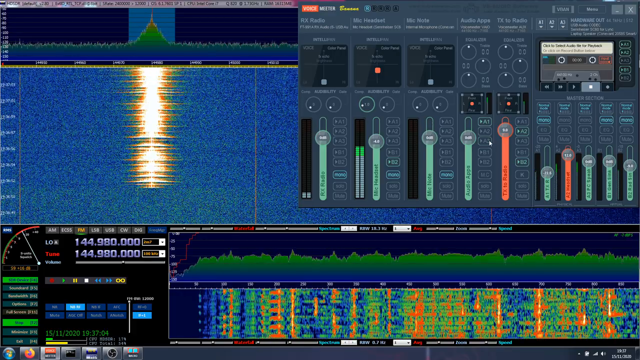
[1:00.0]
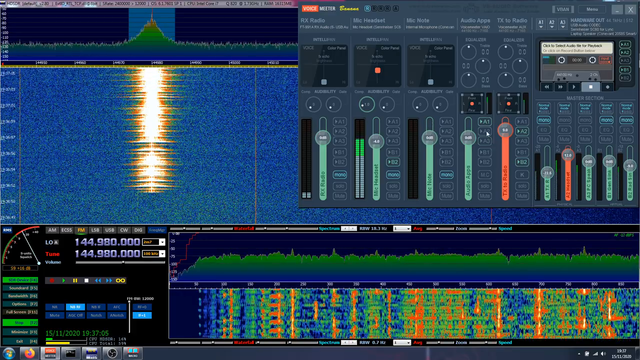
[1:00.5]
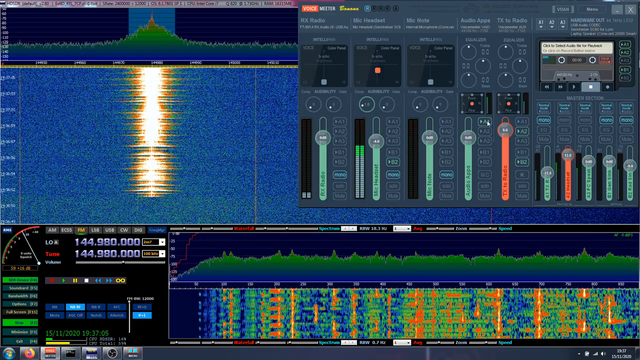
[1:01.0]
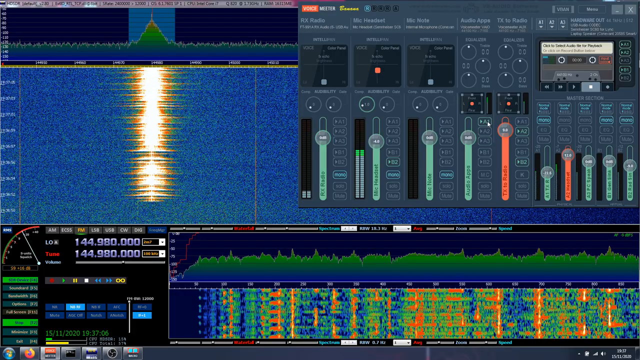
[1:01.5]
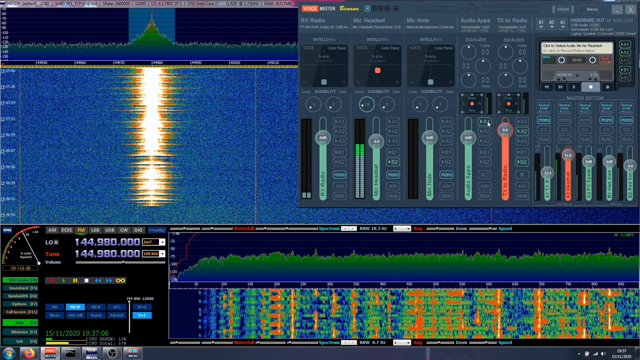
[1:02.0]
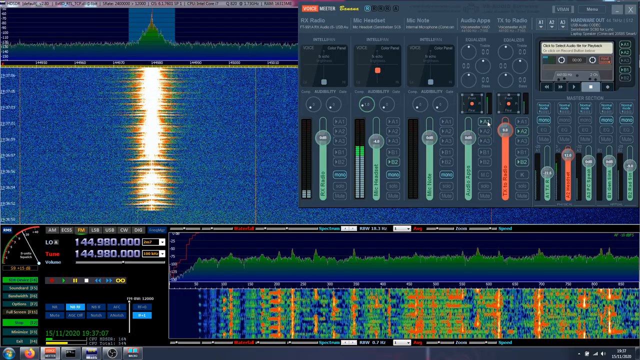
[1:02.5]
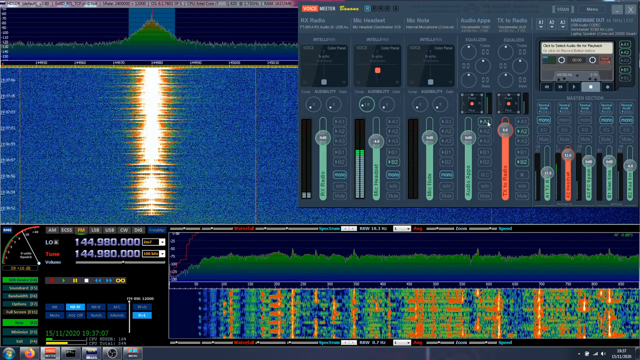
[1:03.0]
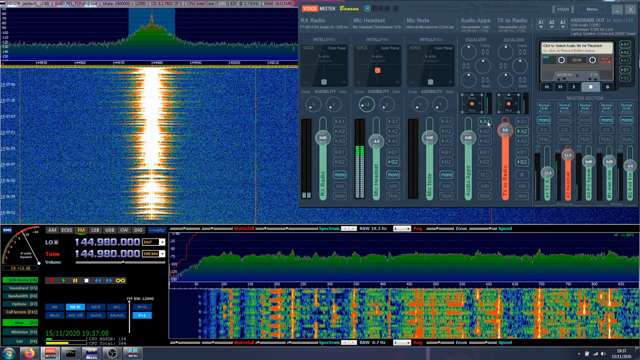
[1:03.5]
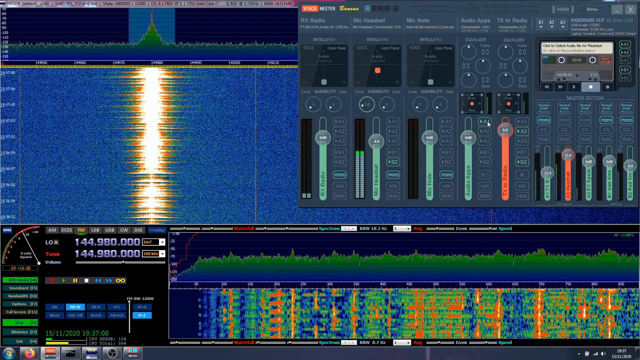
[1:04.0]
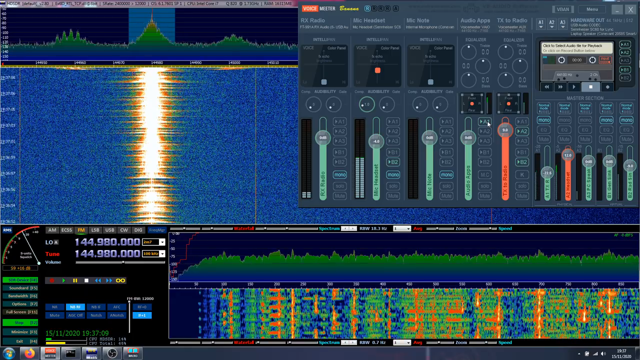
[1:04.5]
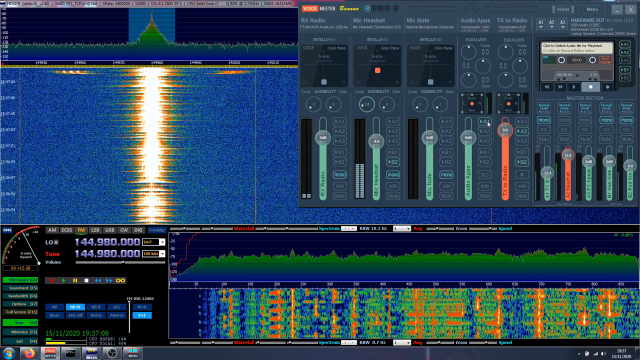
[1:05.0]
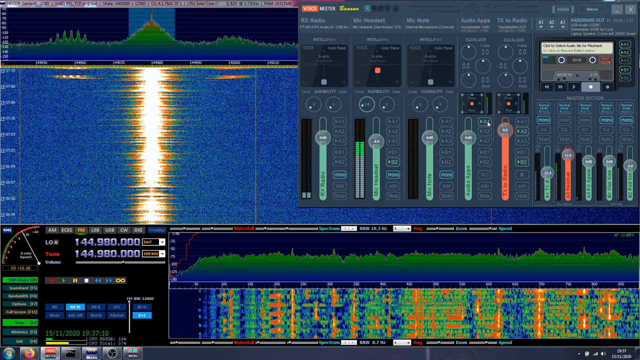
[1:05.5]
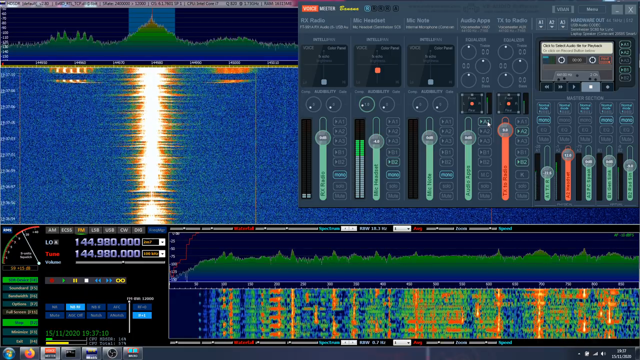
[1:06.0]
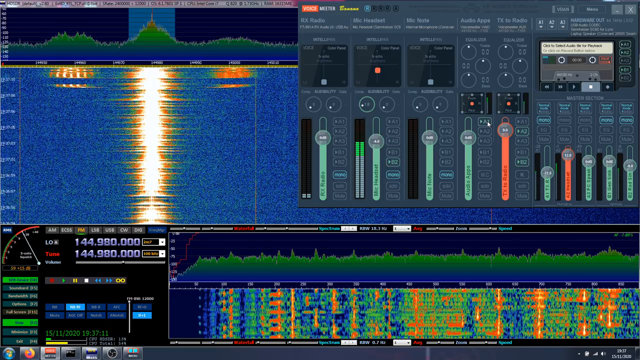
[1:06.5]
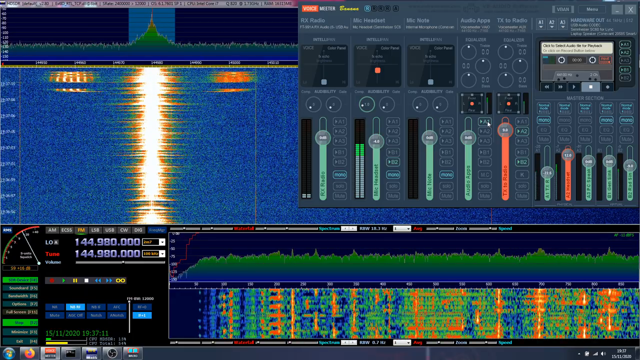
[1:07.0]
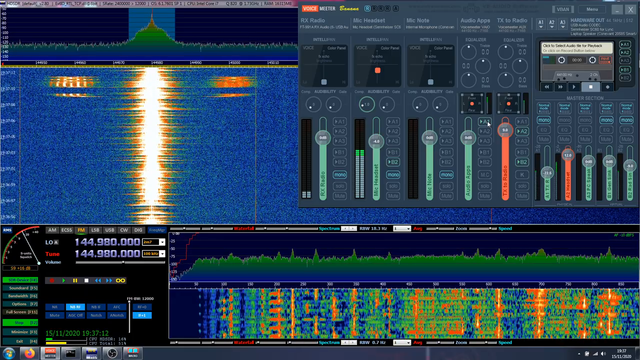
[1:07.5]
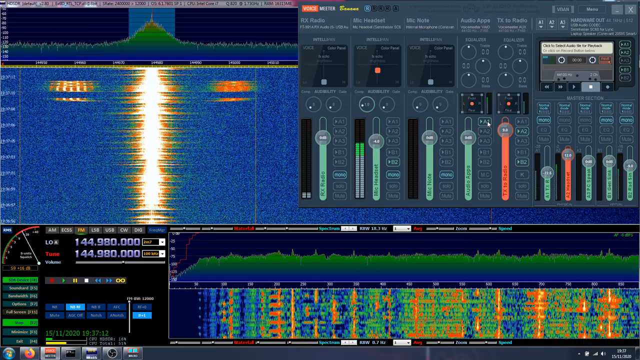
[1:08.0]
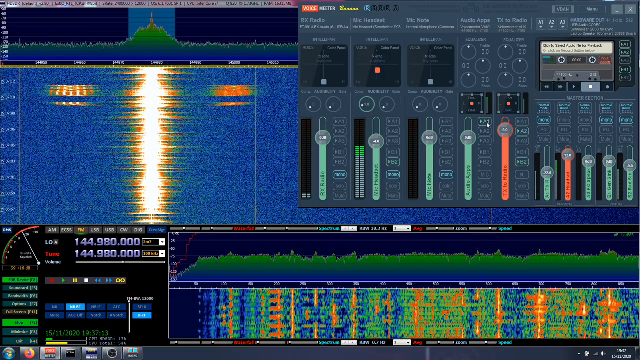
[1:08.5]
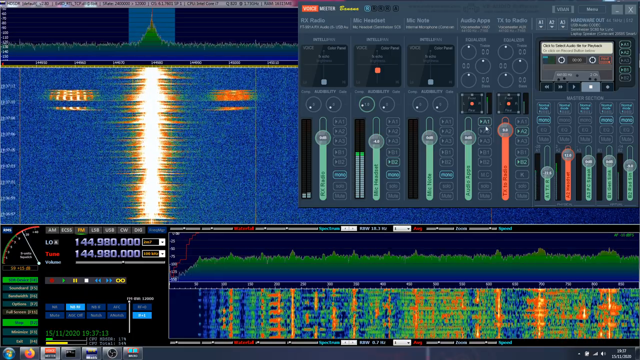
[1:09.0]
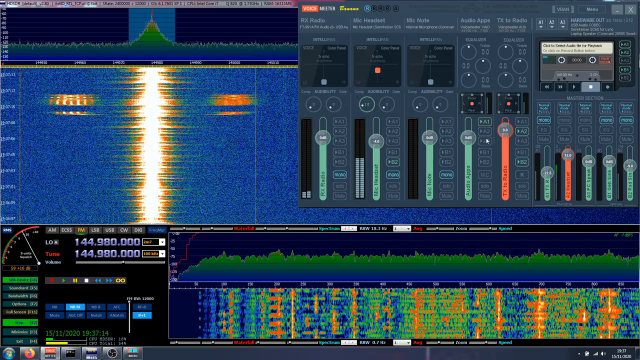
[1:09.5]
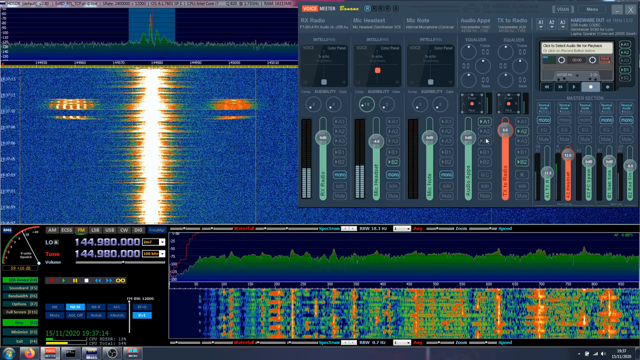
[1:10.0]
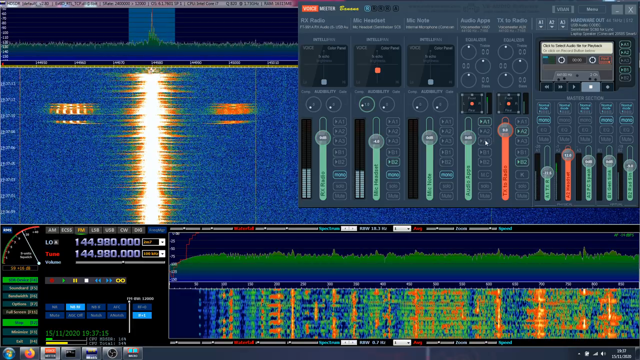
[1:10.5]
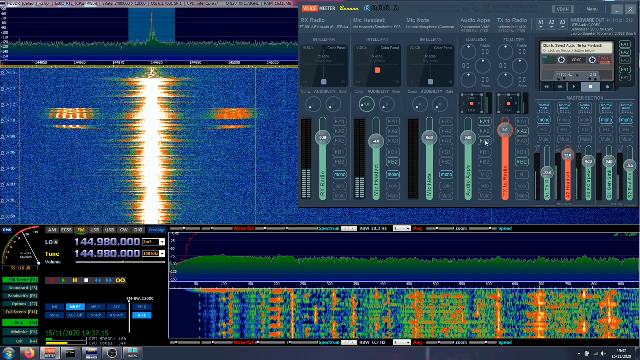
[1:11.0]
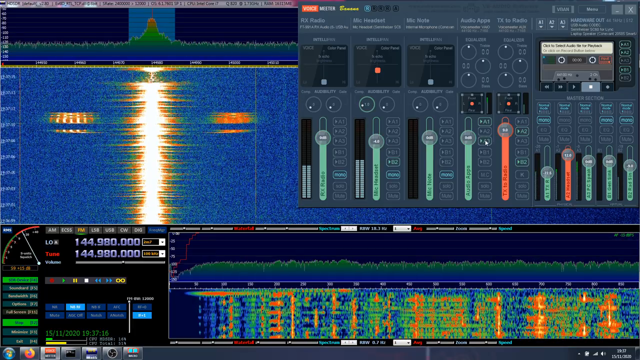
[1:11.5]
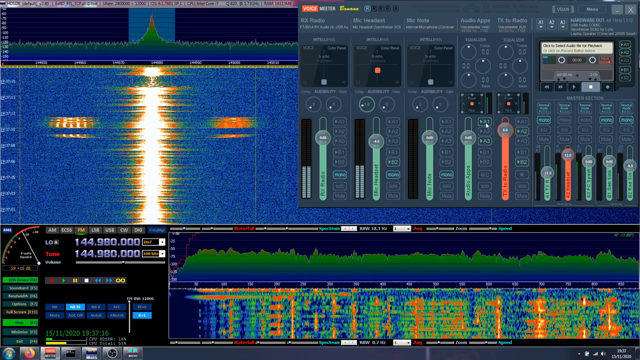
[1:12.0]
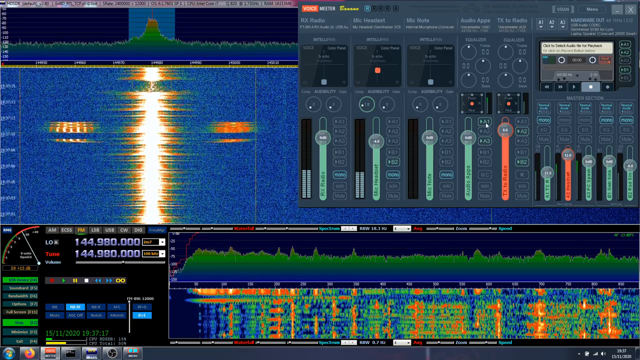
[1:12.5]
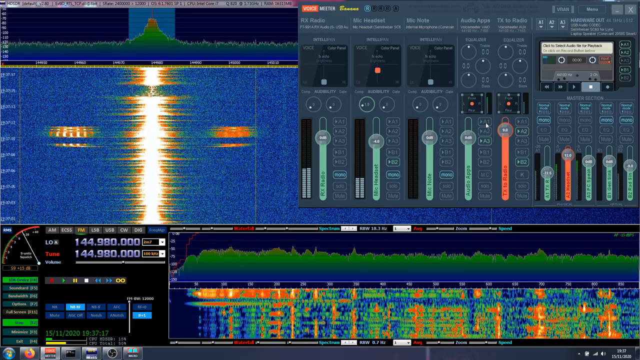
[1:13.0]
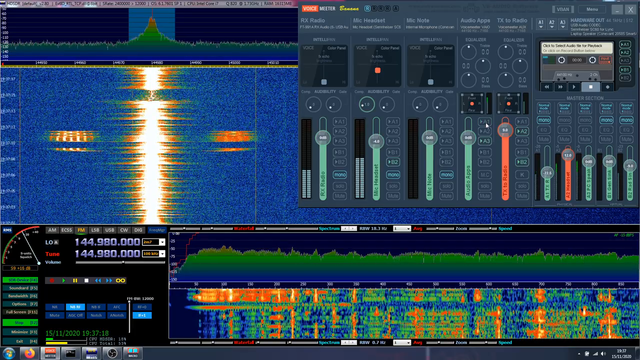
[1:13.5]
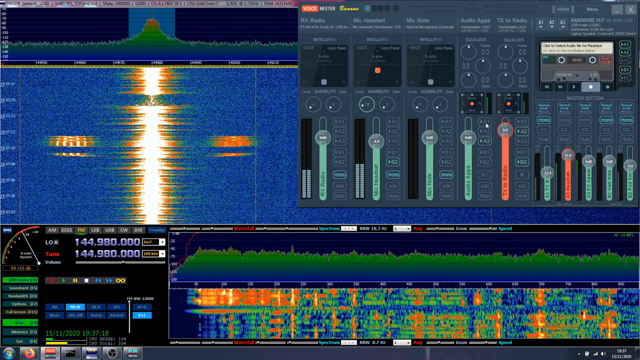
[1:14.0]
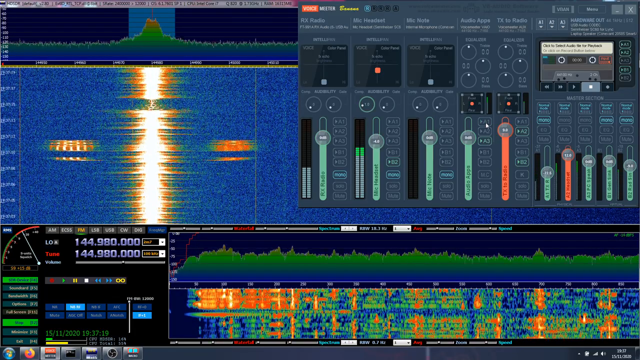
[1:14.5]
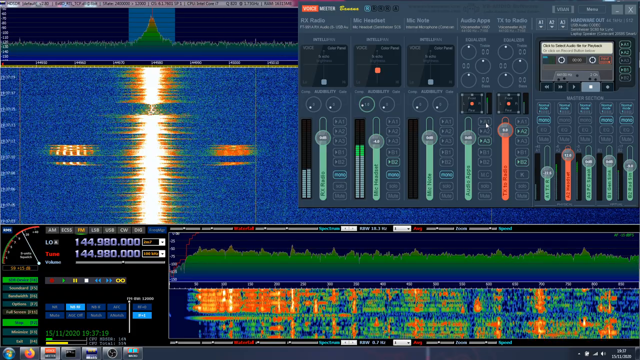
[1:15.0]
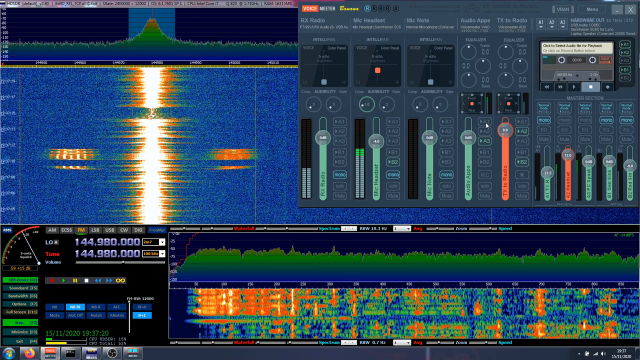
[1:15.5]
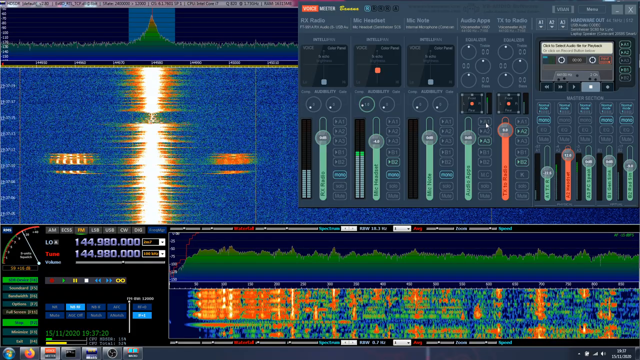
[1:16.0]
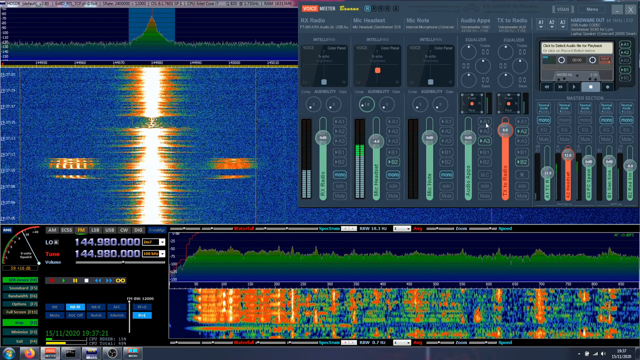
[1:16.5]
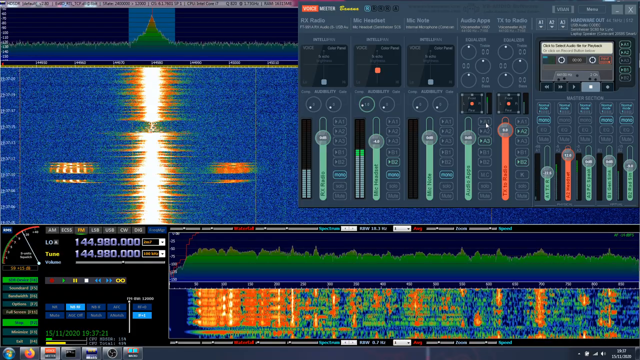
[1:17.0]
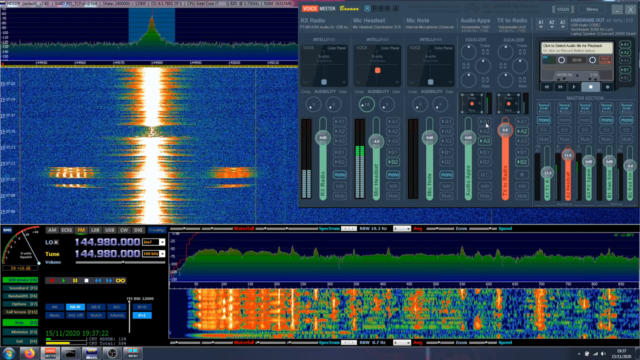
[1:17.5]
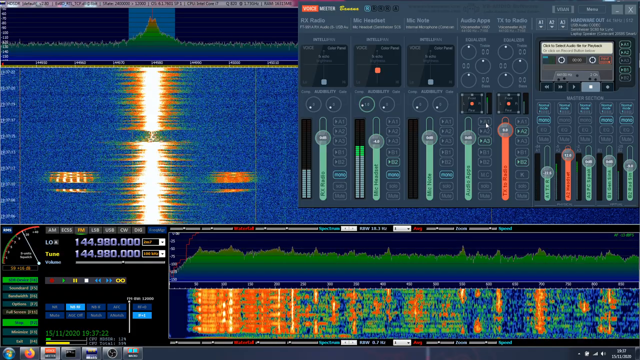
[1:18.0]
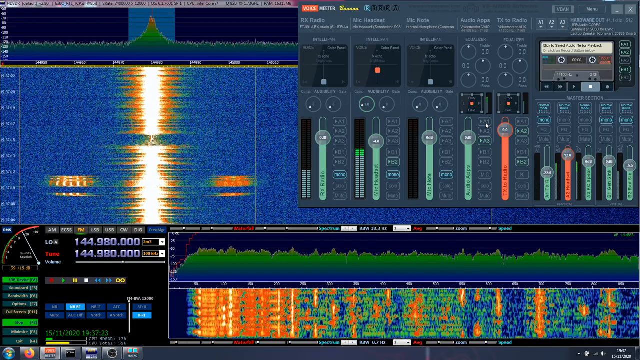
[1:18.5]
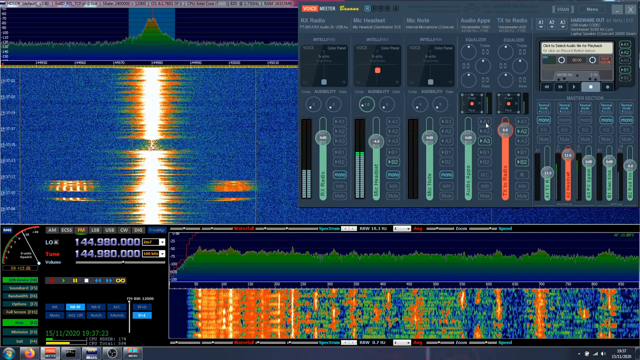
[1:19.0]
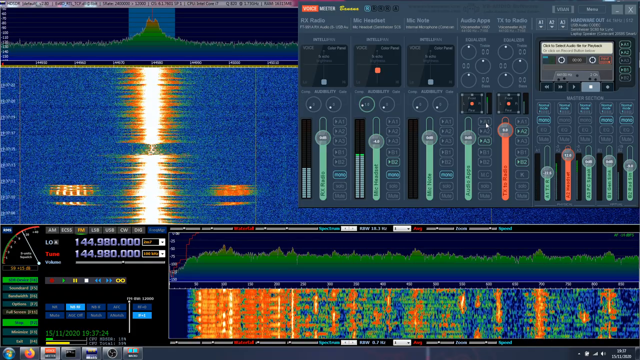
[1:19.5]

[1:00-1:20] New waveforms appear in the project, looking almost like the sun's reflection on the ocean at sunset: a field of blue and green dots, mostly blue, with bright white and yellow waveforms that seem to penetrate it. These new sounds seem to come from the source labeled mic headset, possibly the creator talking or singing into the mic over music already playing. The new source seems much louder than the older sounds, as shown by a large peak in the top left of the screen: in that top left rectangle, green lines look almost like a forest, and a very large peak with a yellow point at its top is surrounded by a blue region.